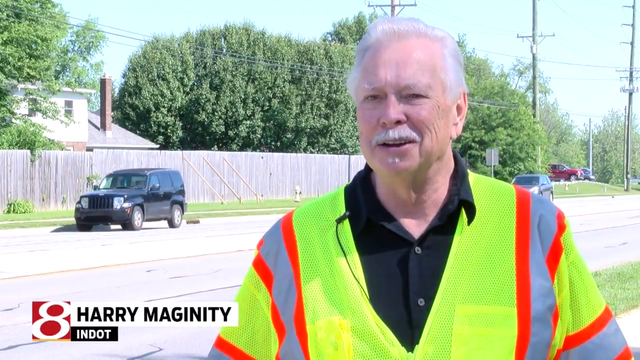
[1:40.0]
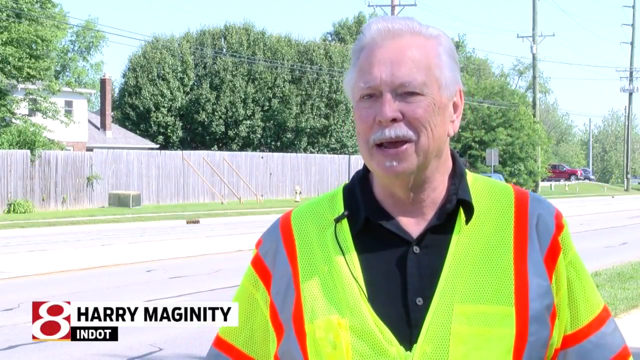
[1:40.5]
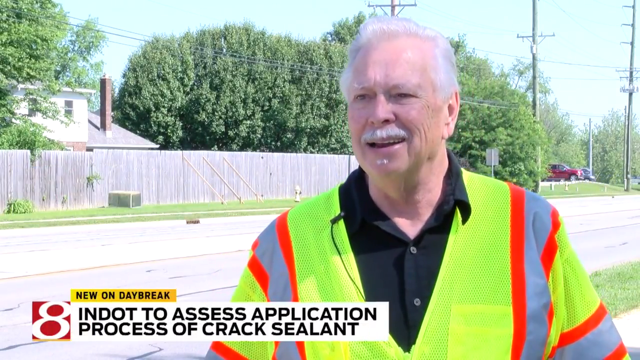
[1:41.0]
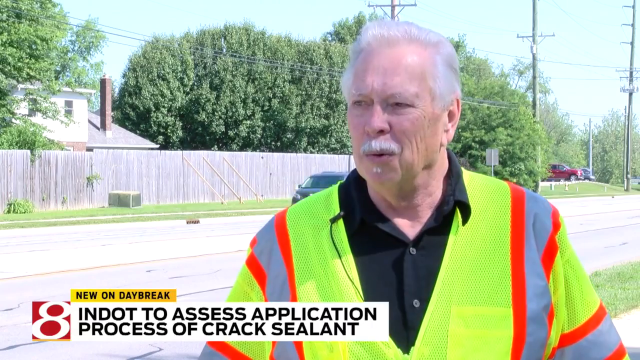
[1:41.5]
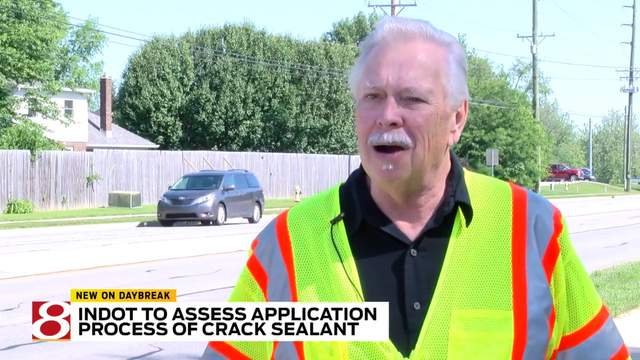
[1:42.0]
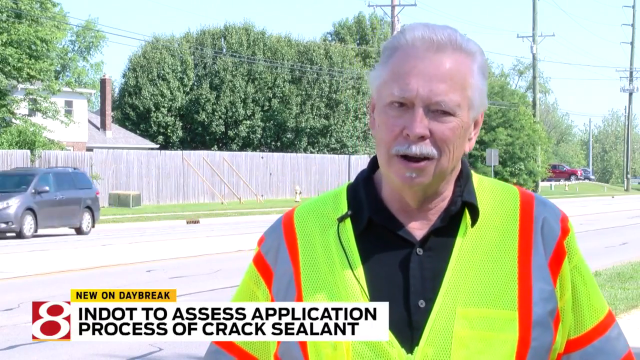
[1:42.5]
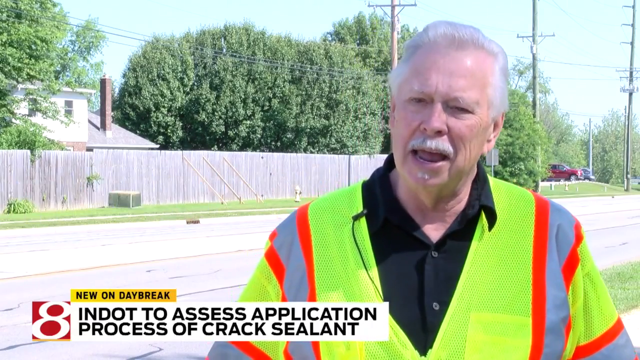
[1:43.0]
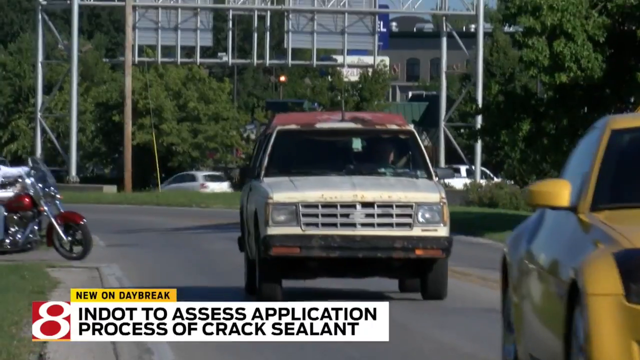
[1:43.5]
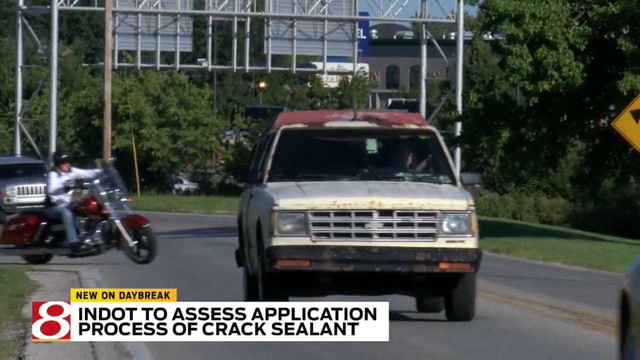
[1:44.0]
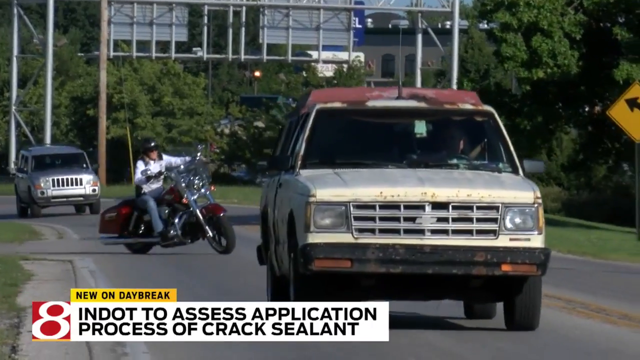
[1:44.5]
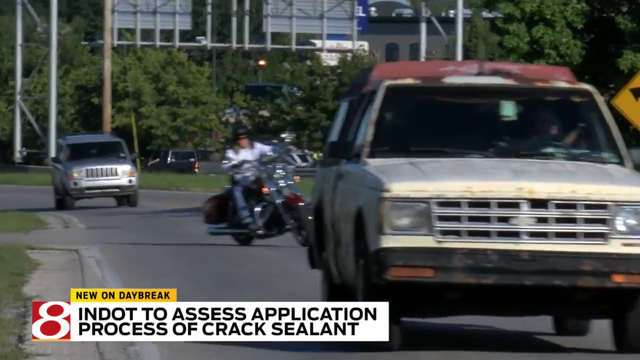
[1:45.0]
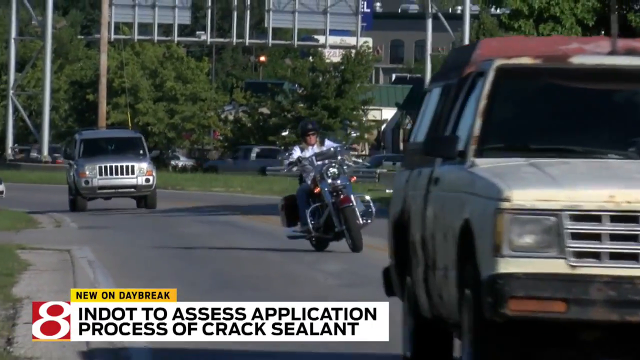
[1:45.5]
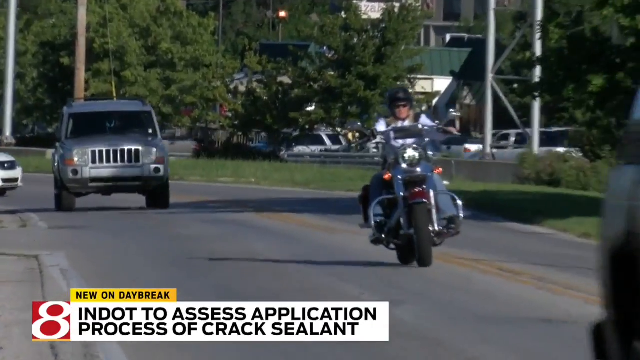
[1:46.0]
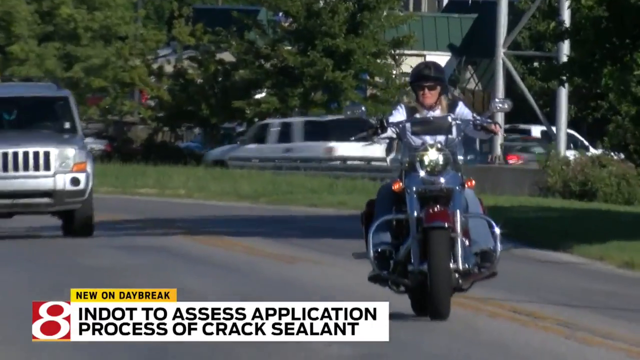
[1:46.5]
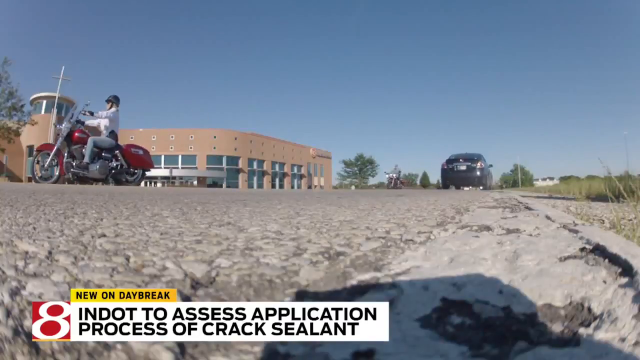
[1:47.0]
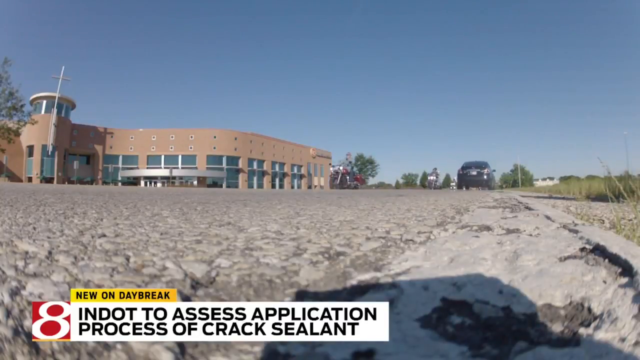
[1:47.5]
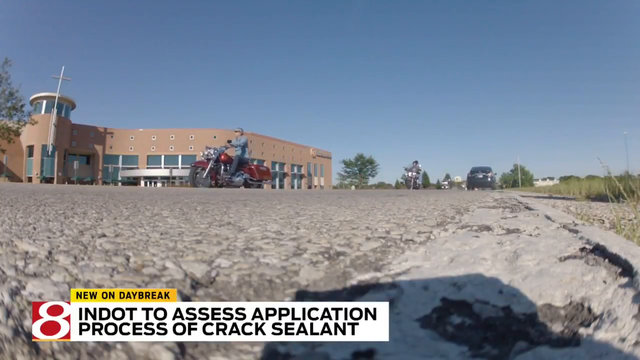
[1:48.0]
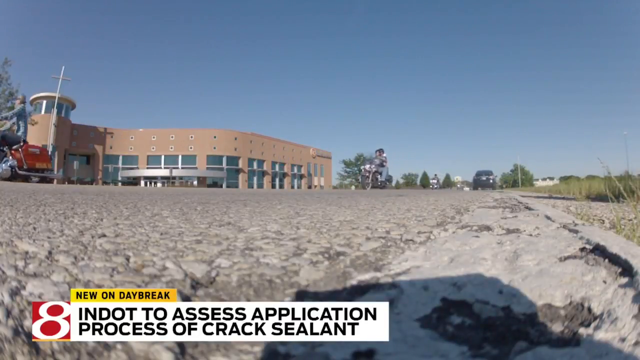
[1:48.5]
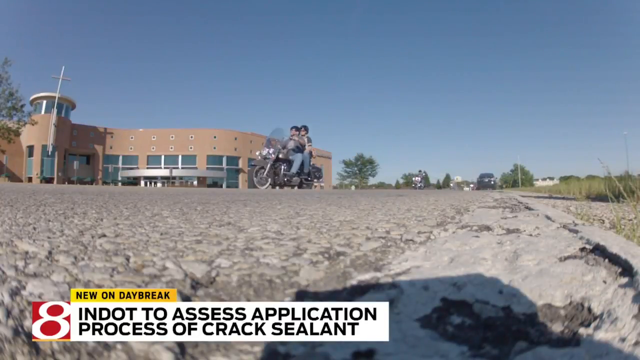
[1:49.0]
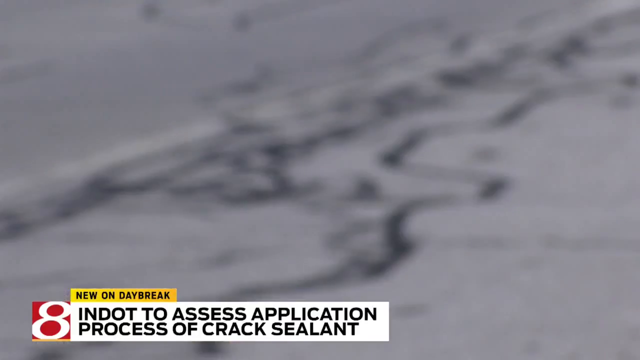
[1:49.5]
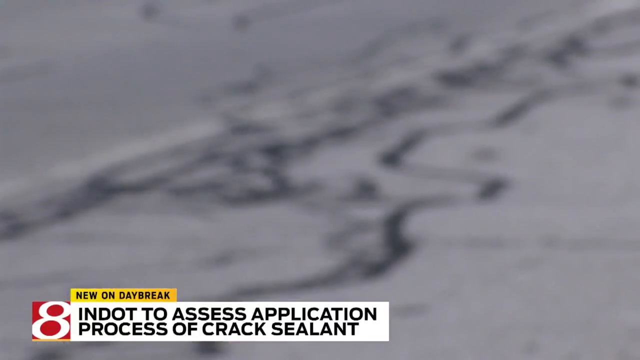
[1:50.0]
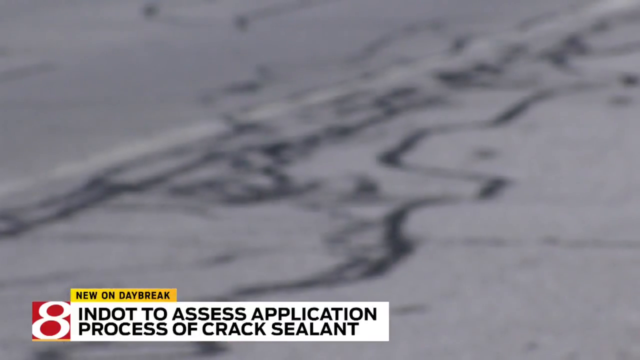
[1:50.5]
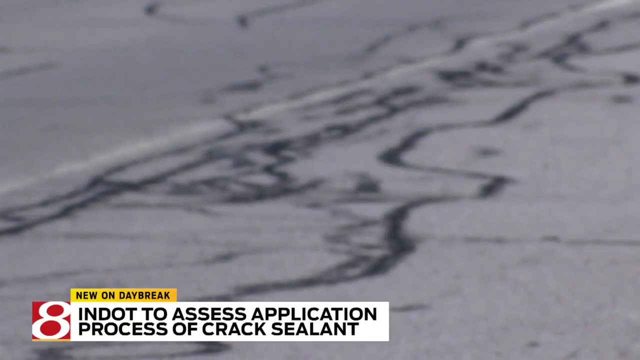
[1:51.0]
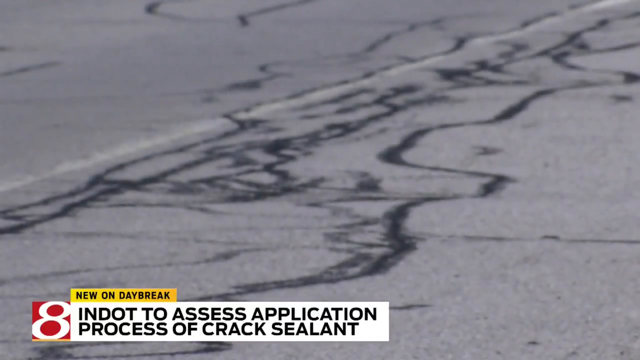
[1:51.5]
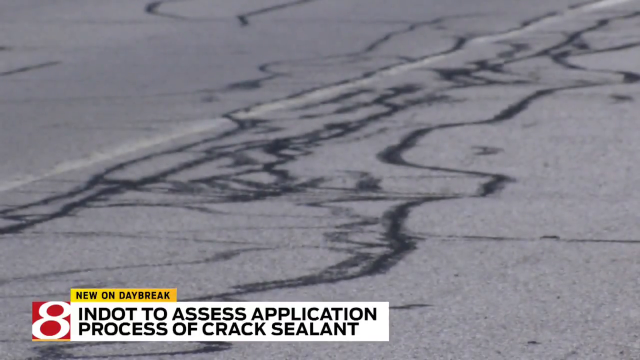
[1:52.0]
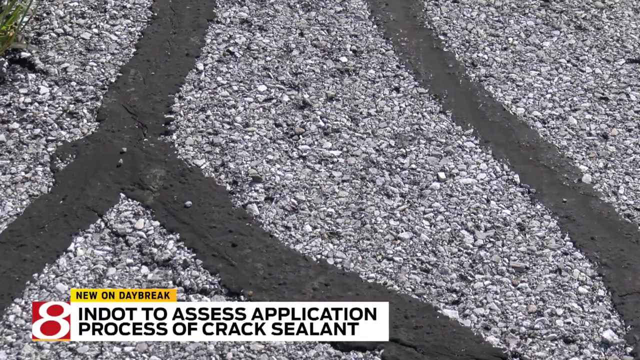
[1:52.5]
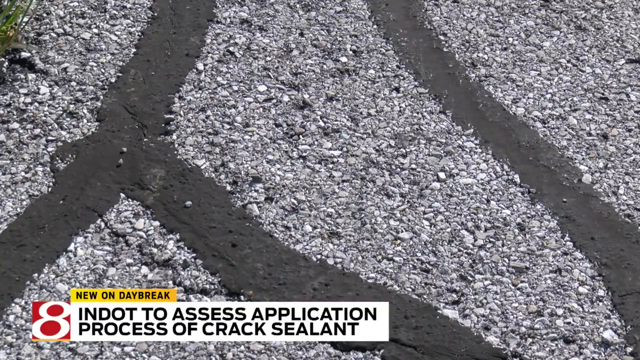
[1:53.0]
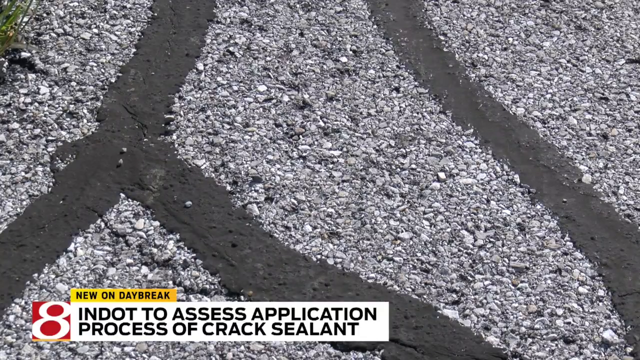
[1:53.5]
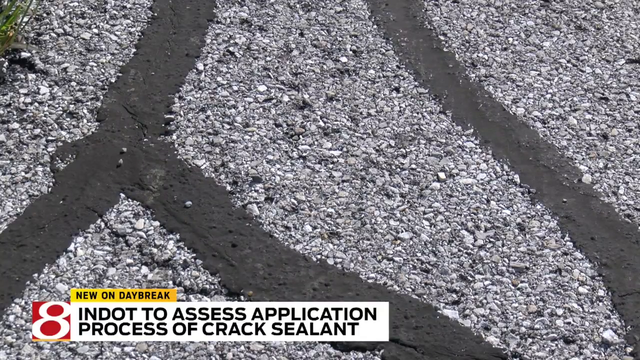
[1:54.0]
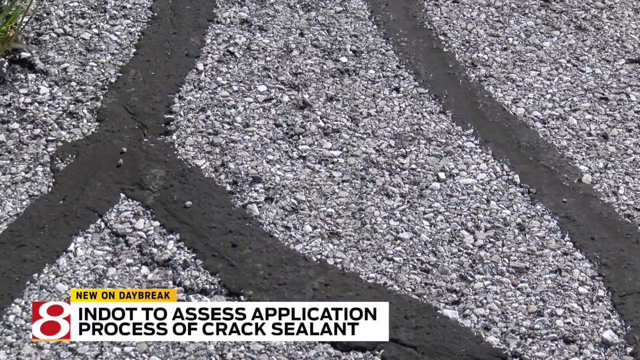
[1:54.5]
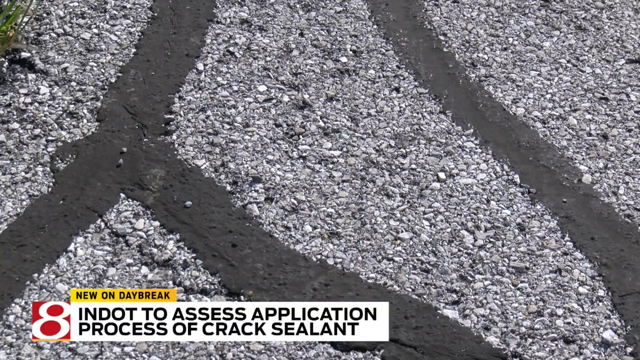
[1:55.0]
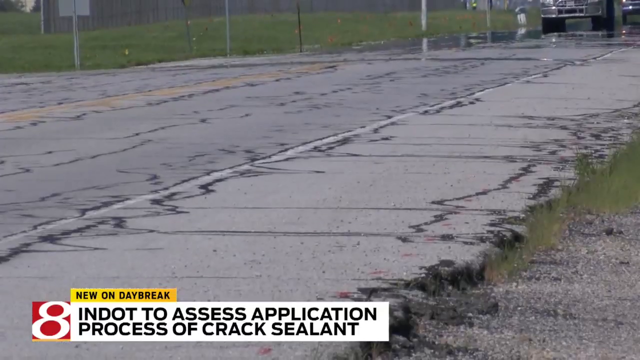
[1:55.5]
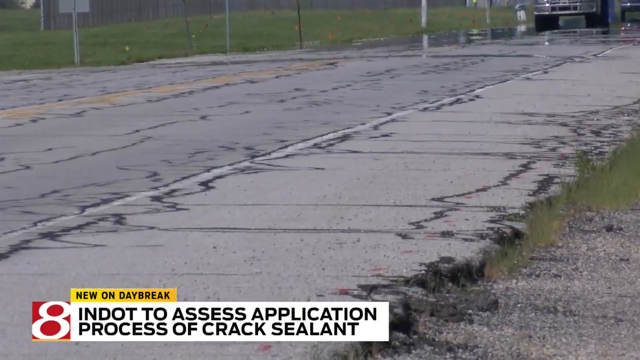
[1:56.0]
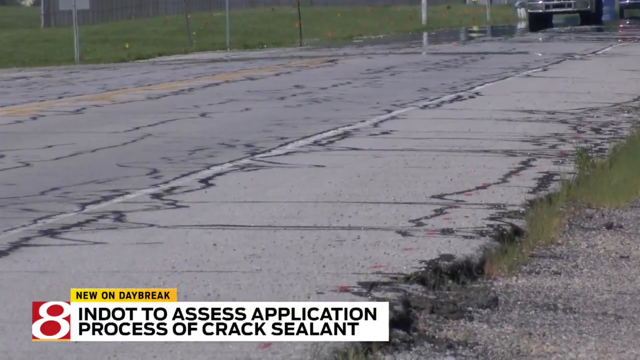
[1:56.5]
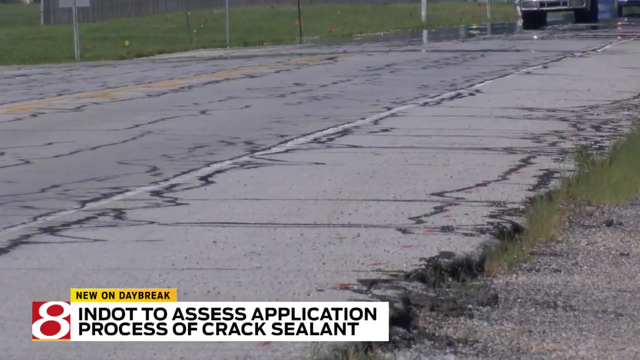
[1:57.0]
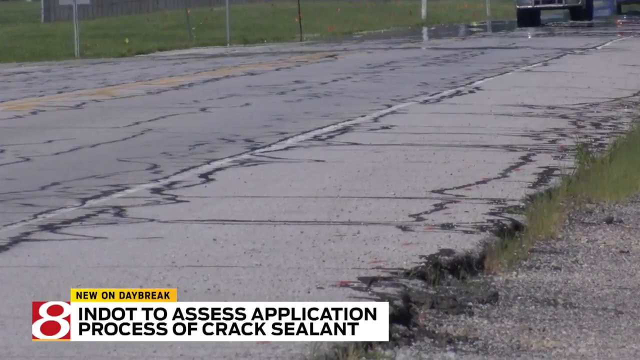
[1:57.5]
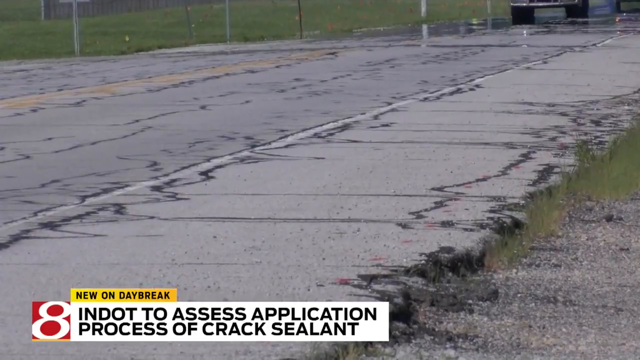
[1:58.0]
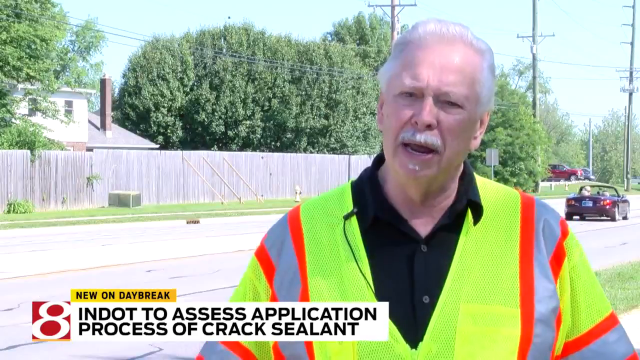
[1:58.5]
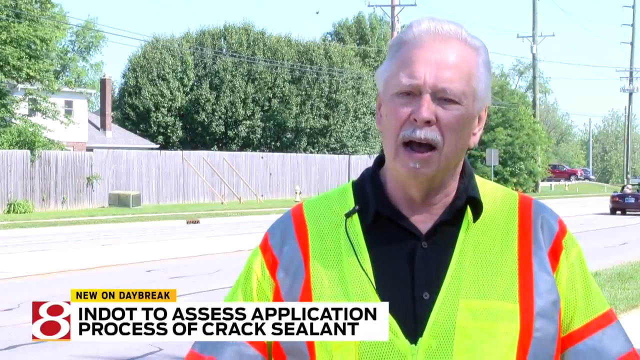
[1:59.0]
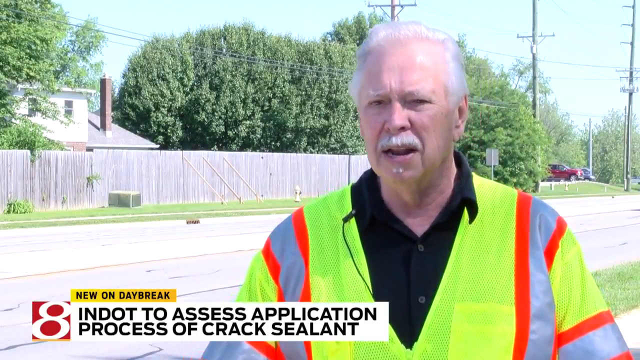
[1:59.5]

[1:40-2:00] The Channel 8 report, marked "new on daybreak," shows an interview with Harry McGinty of the Indiana DOT. He wears a yellow reflective protective vest with orange and gray, and a black shirt underneath, and is probably in his mid to late 60s. Text reads "to access application process of crack sealant." A close-up shows overuse of the sealant on a road in Indiana.